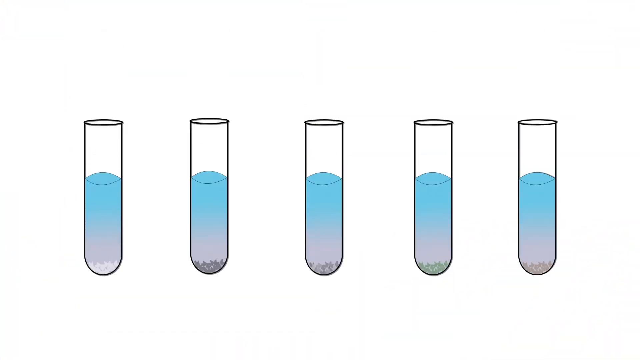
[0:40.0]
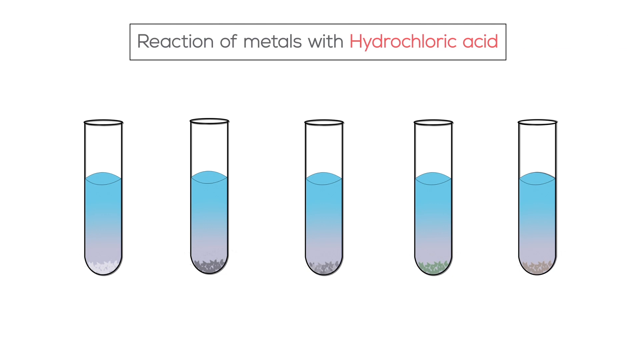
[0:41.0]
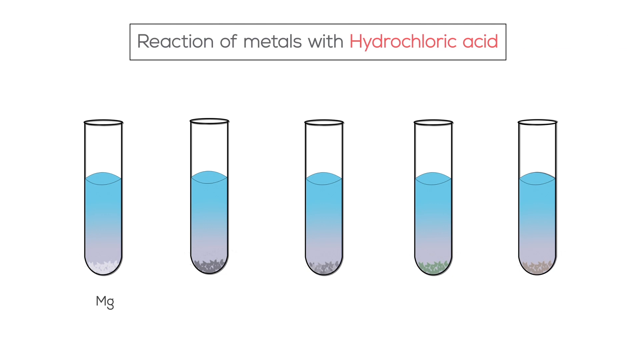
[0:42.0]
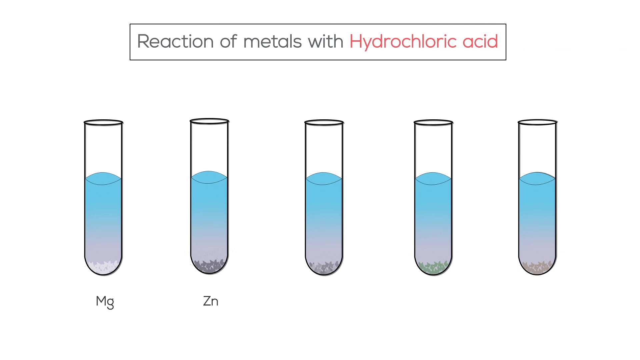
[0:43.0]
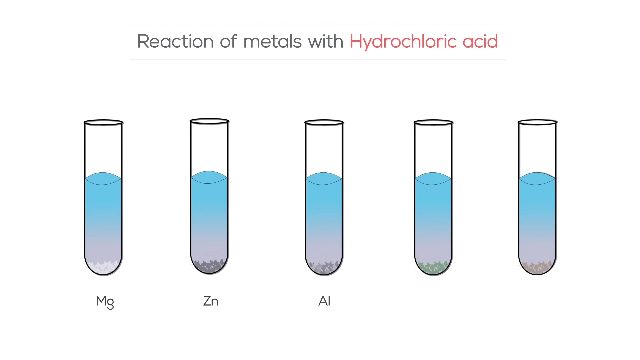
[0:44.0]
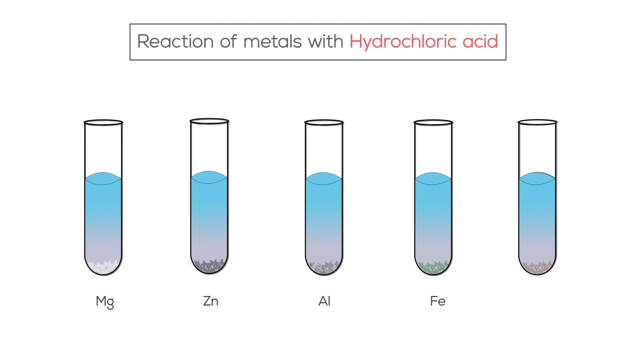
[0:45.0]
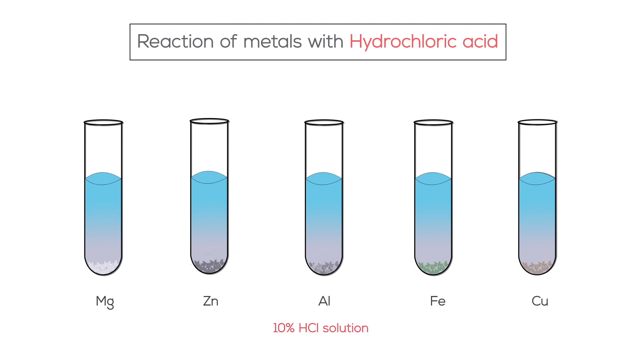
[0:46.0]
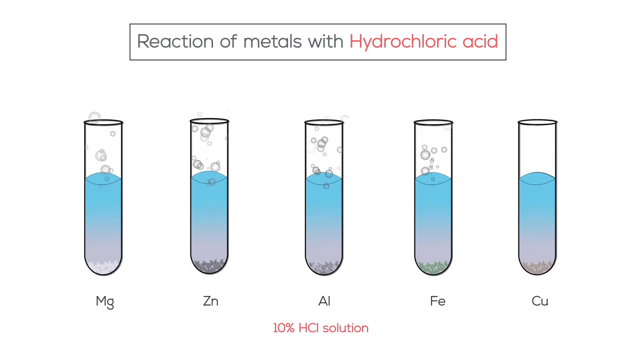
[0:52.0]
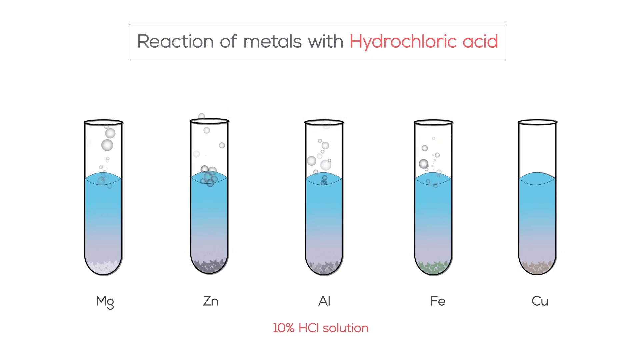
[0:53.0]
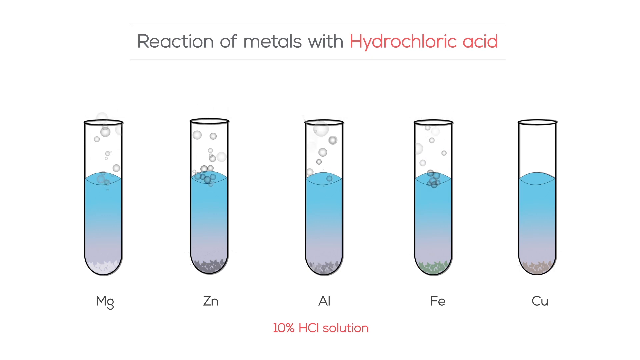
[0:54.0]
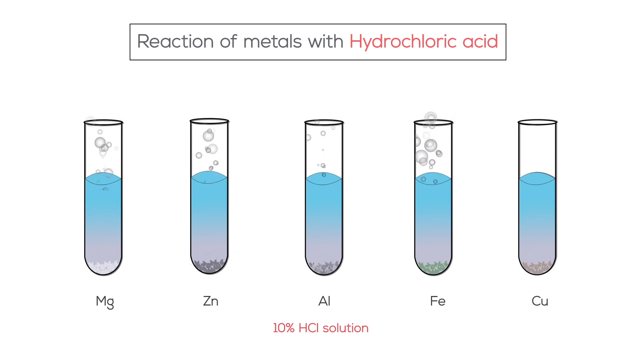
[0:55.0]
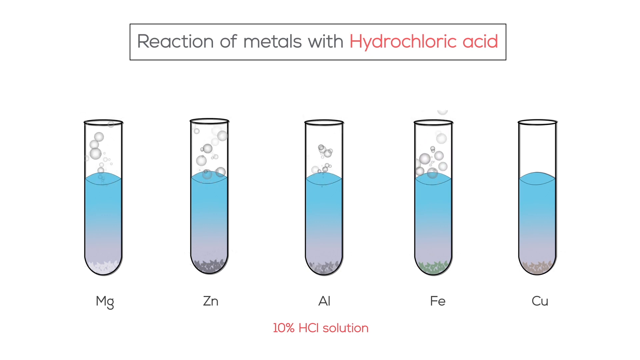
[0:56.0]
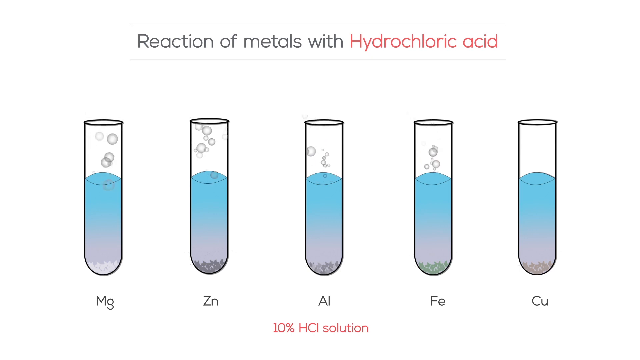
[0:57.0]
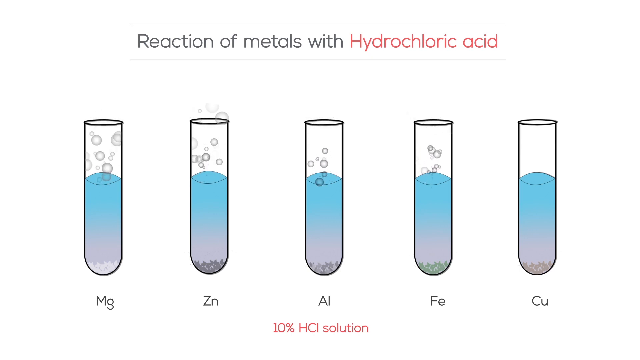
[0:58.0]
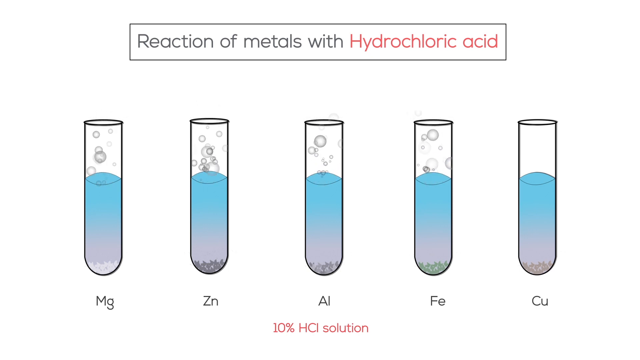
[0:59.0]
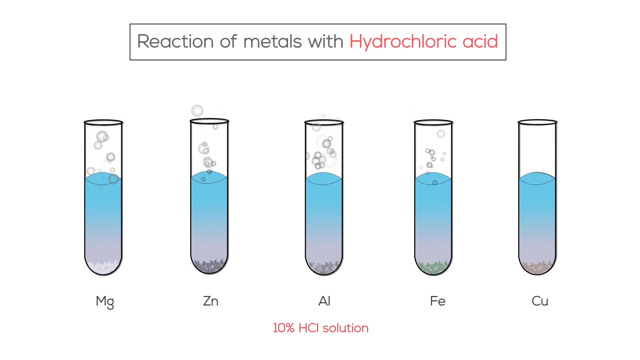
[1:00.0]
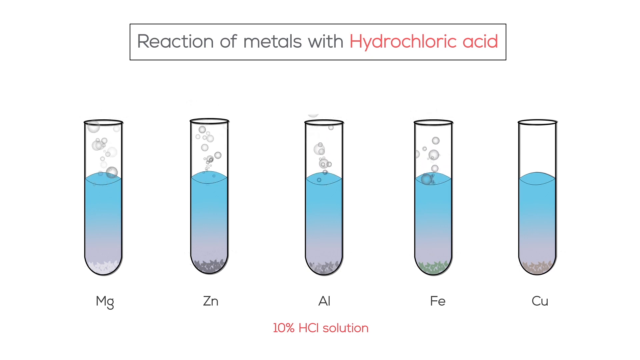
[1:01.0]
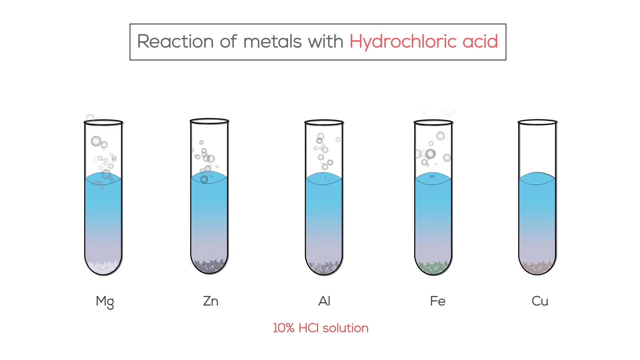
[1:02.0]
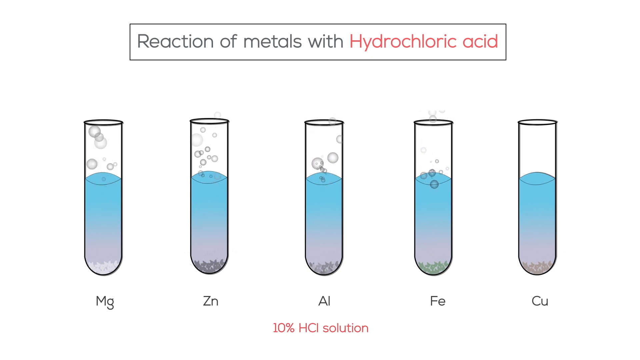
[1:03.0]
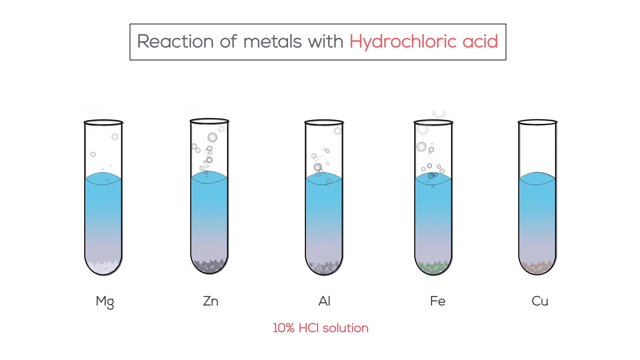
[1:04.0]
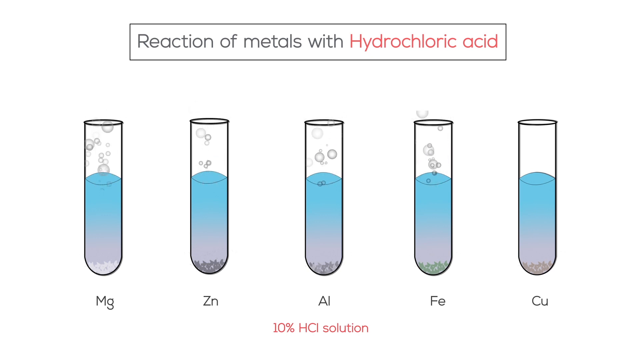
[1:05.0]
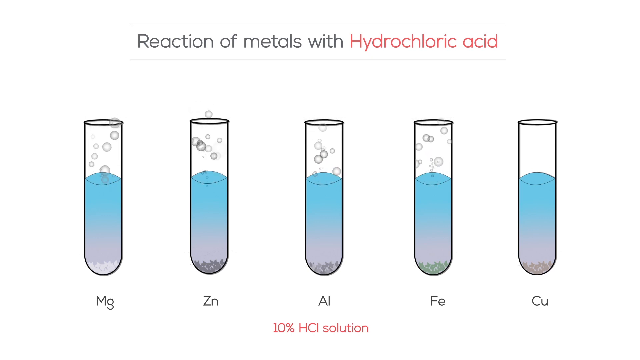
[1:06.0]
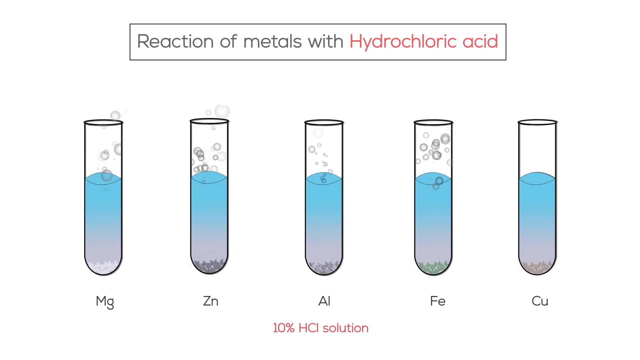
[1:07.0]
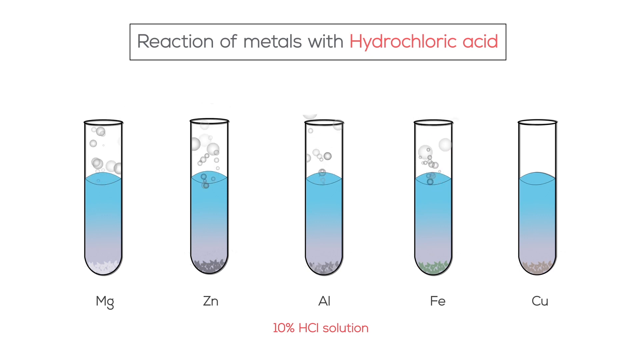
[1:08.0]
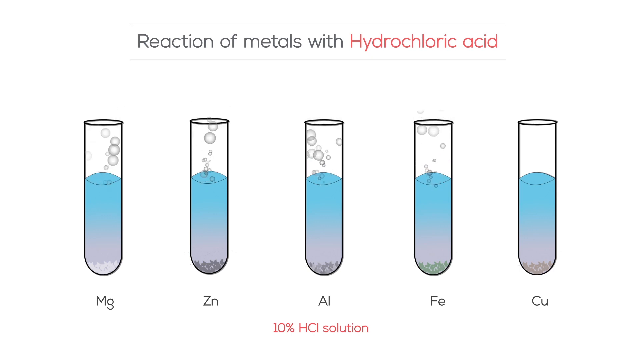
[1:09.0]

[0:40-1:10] The five test tubes stand in a row, each now labeled with a different metal: the first is Mg (magnesium), the second Zn (zinc), the third Al (aluminum), the fourth Fe (iron), and the fifth Cu (copper). Below the test tubes is text reading "10% hydrochloric acid", and the title of the slide is "reaction of metals with hydrochloric acid". Bubbles rise from the first four test tubes, while the last one has no bubbles coming out of it. Magnesium has the most rapidly moving bubbles; the other three have less. The animation stays on screen until the end of the shot.